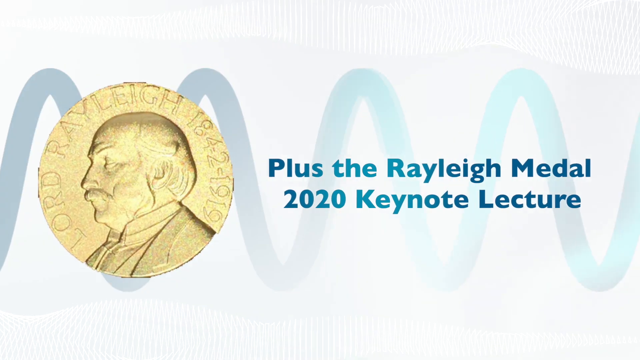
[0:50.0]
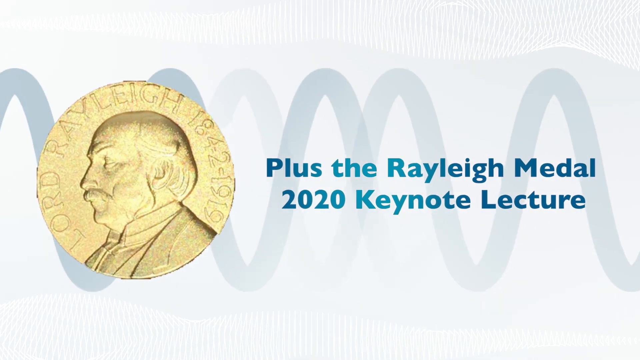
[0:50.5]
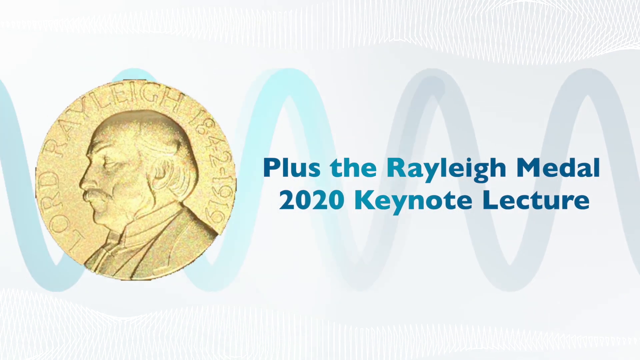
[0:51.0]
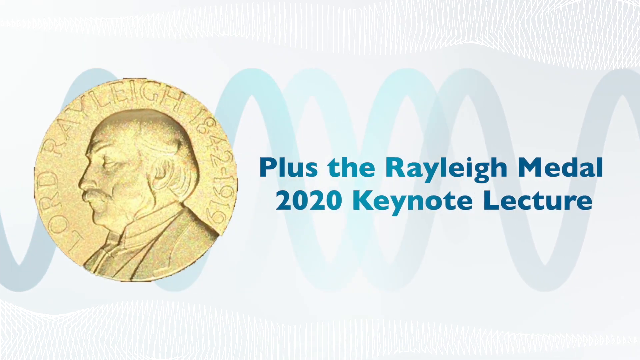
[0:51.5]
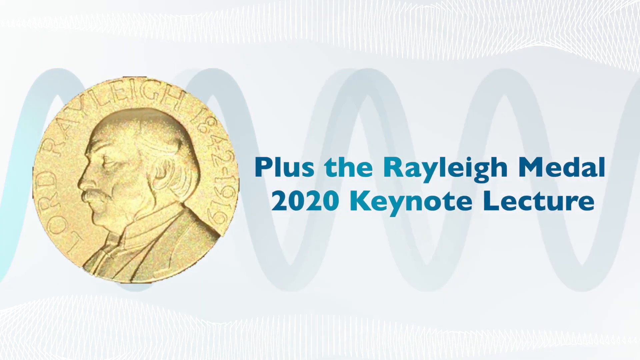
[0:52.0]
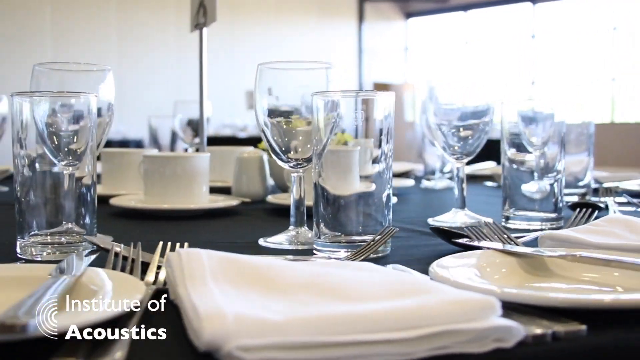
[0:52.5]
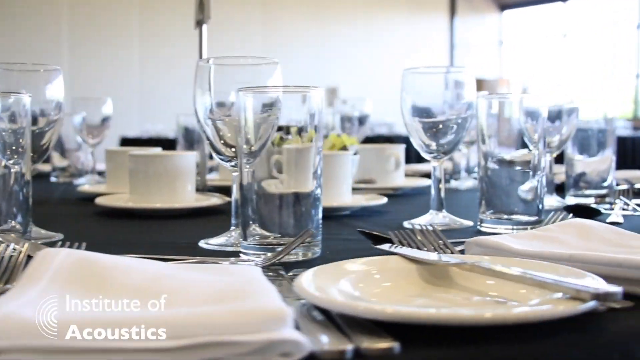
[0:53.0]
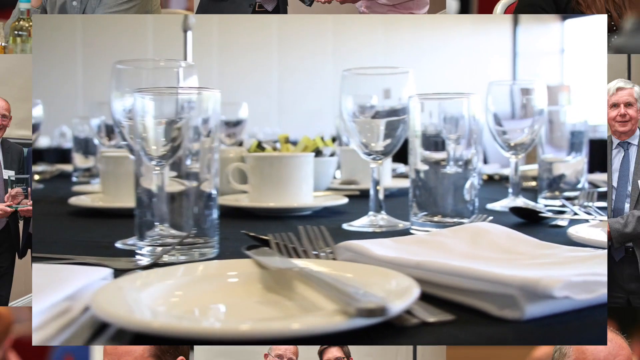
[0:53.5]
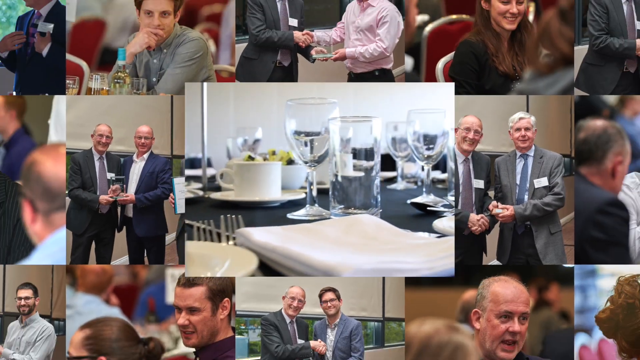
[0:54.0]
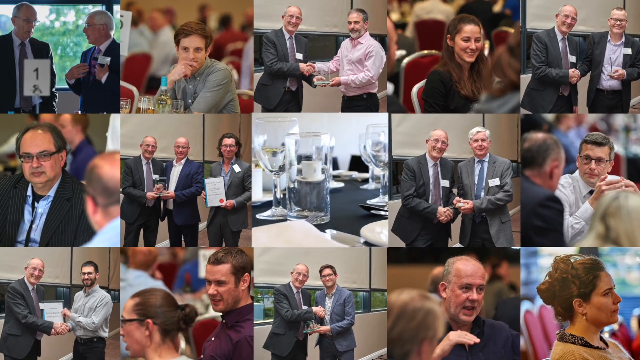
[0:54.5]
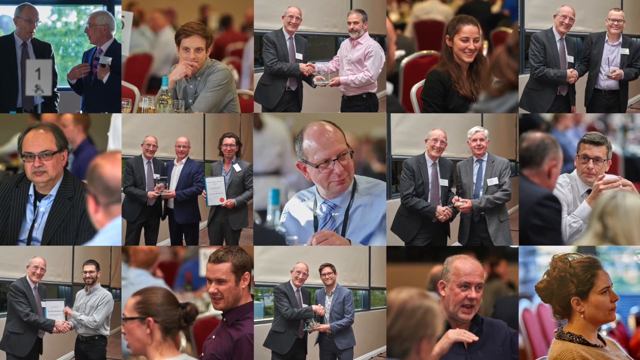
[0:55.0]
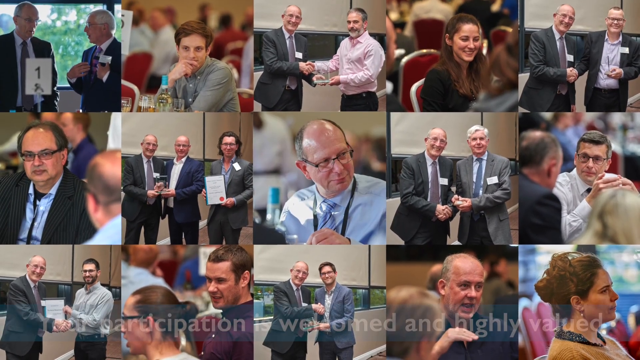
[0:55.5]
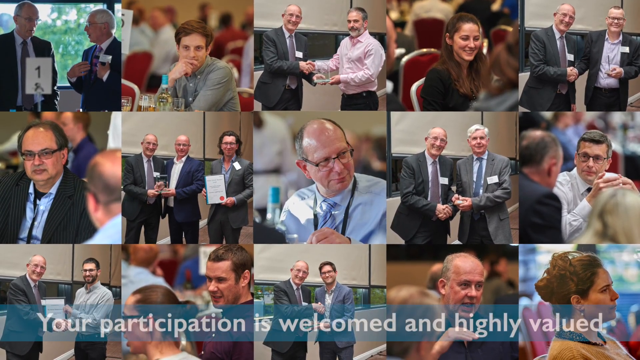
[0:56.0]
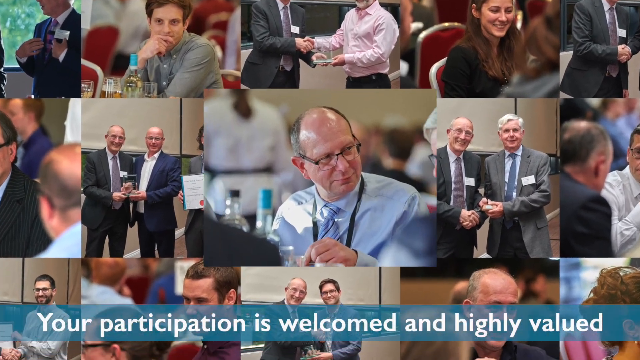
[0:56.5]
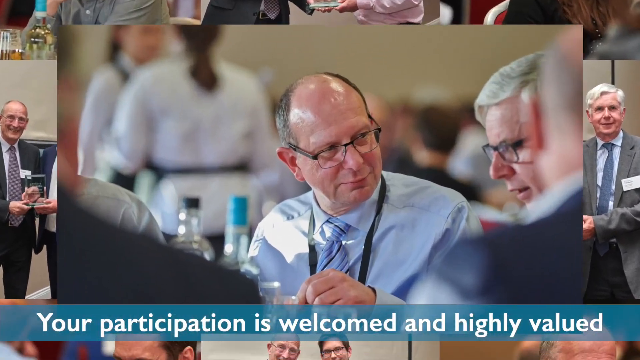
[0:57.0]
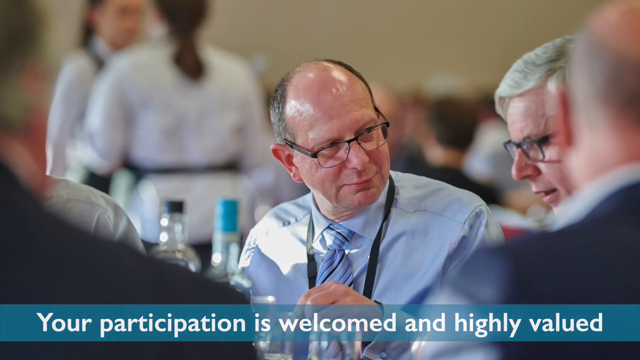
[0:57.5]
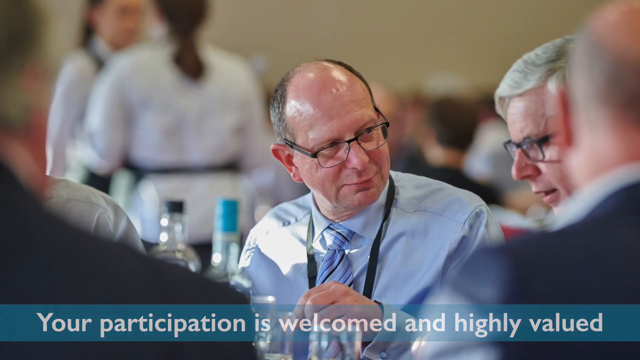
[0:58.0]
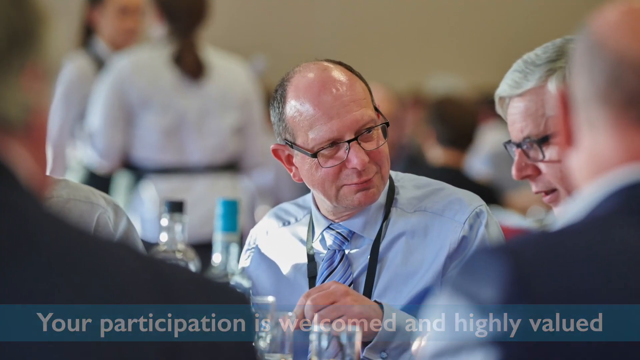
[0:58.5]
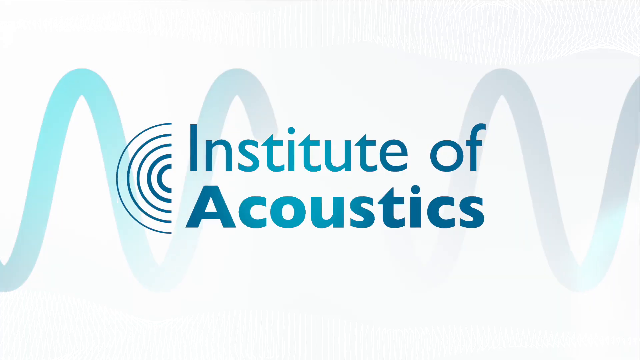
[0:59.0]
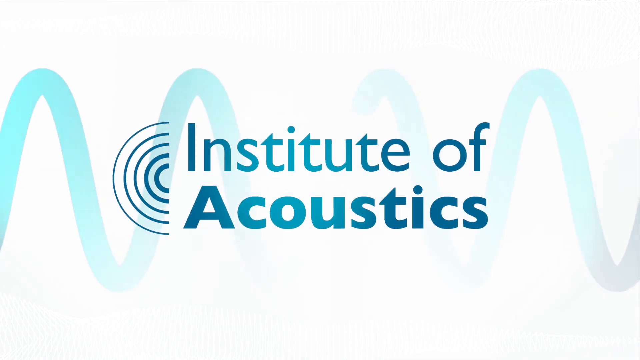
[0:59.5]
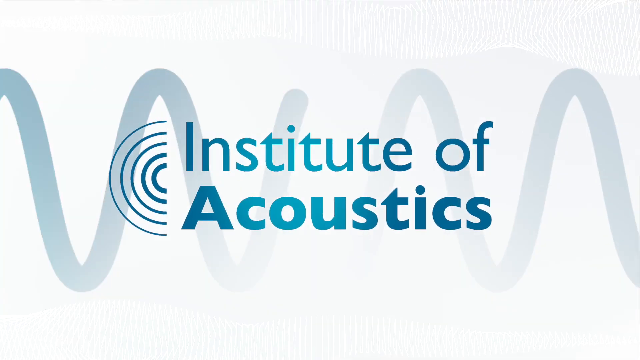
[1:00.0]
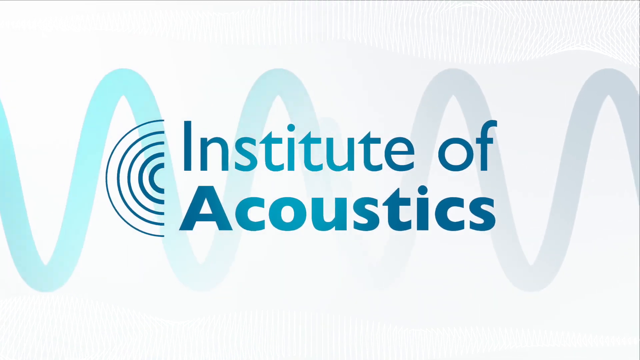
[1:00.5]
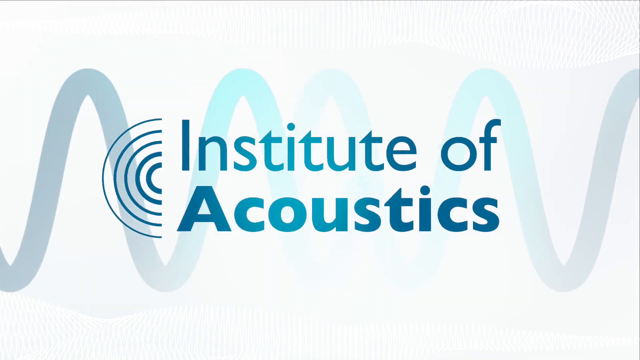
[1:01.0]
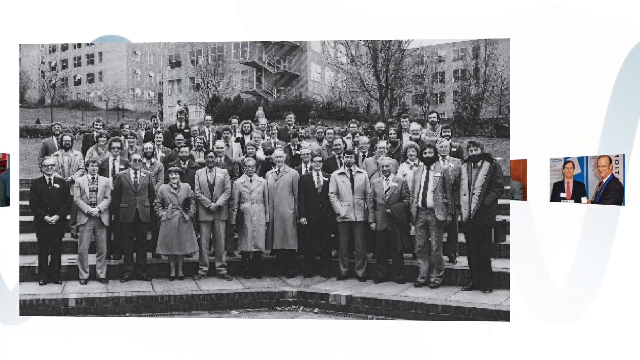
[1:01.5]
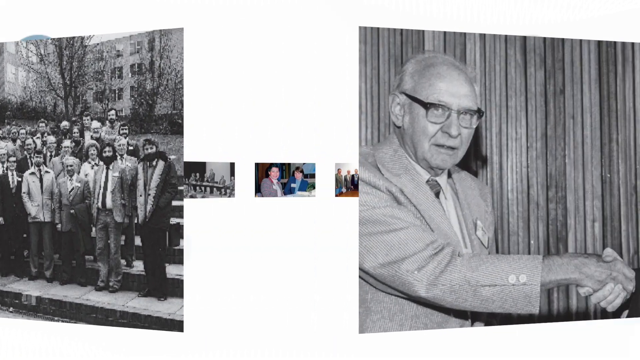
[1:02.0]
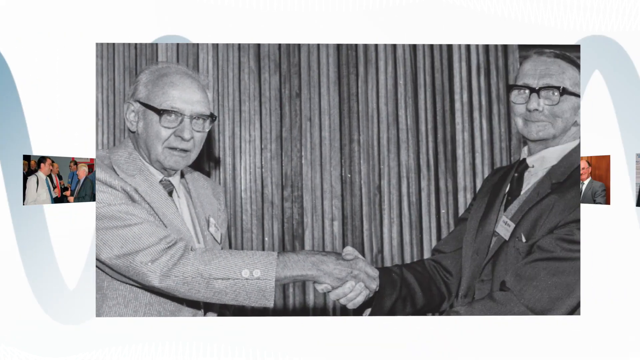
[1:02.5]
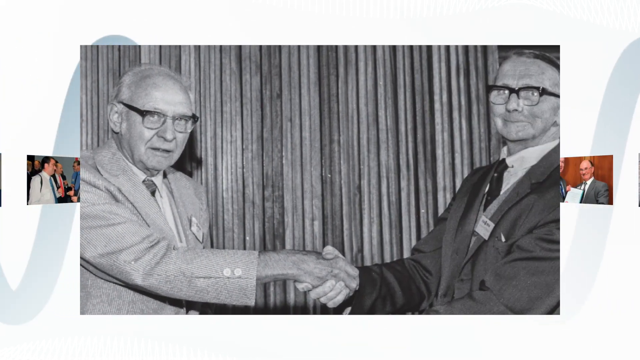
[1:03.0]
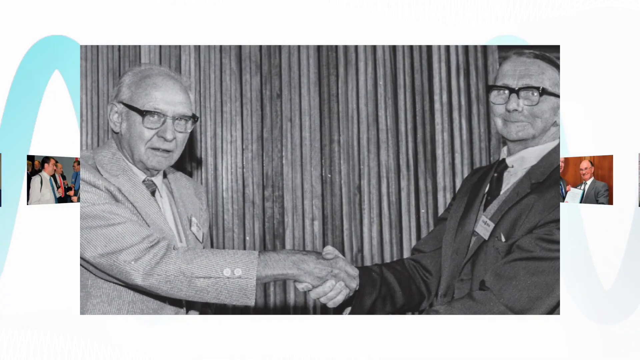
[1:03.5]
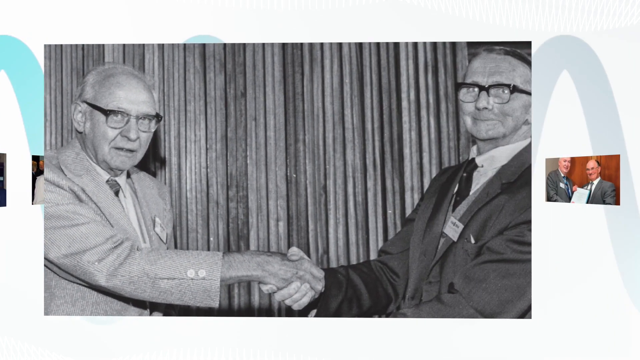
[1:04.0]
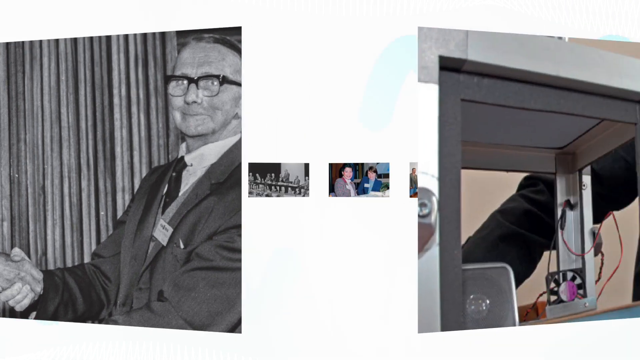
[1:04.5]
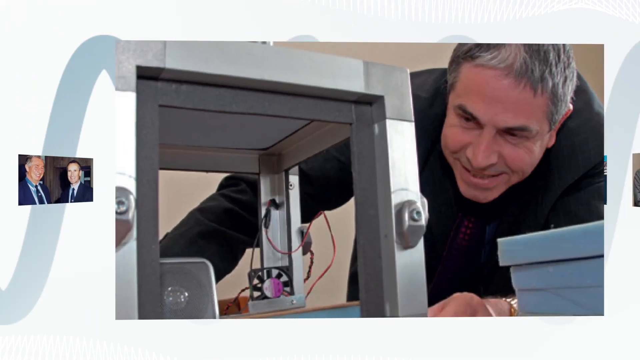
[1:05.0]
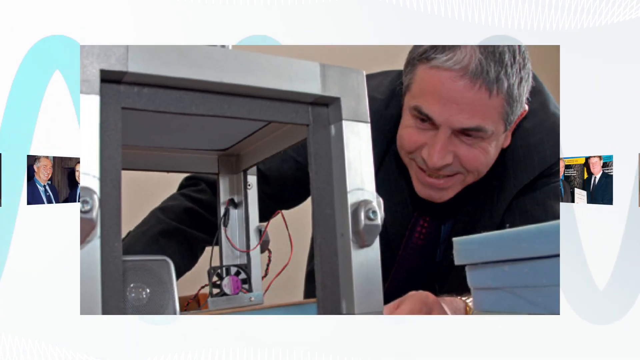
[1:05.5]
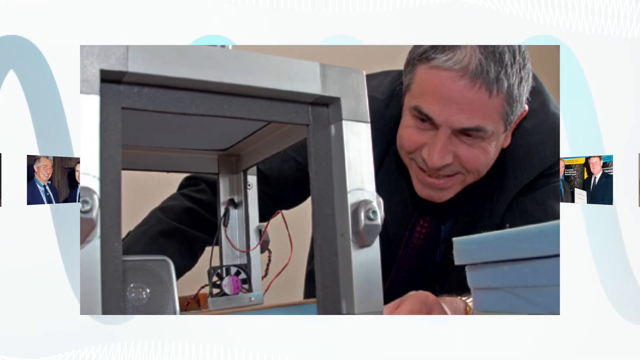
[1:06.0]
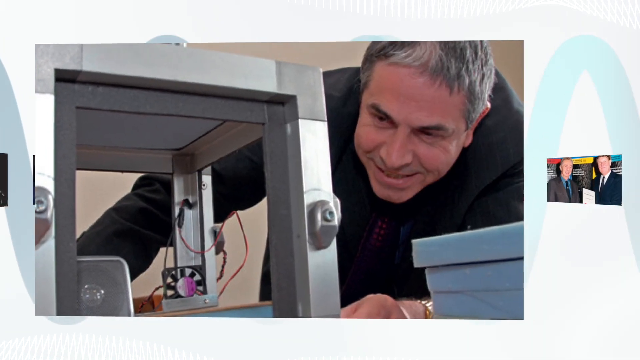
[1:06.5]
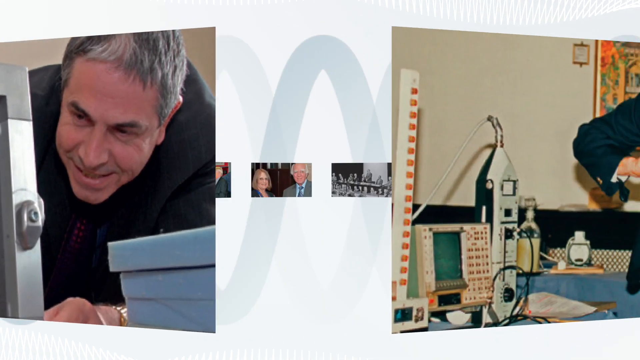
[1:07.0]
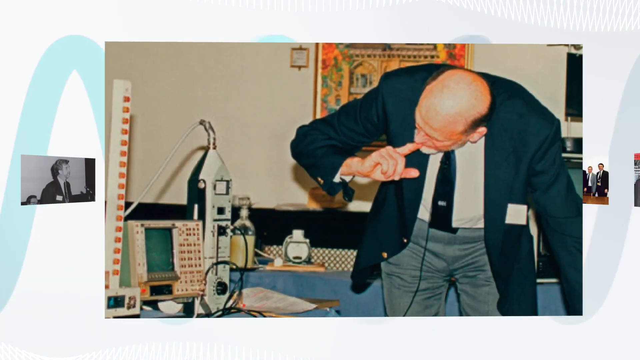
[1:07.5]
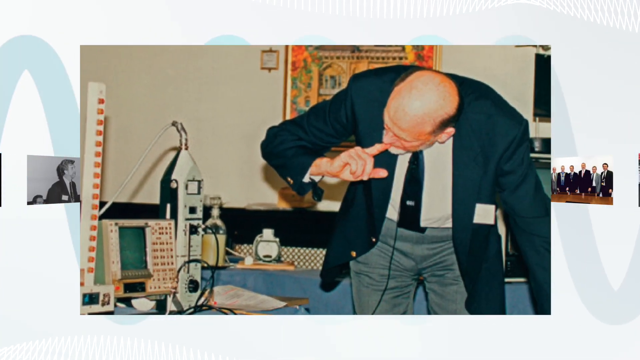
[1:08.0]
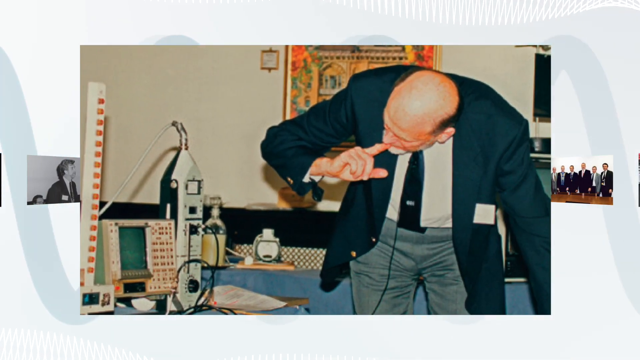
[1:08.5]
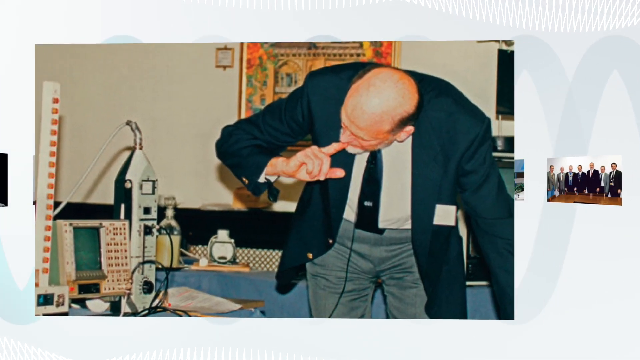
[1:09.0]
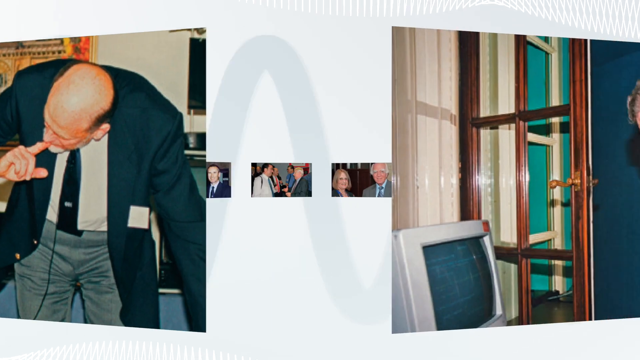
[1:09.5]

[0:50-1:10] Text reads "Lord Rayleigh 19." Many tables are set out with wine glasses, other glasses, forks and other items. Many people, dressed formally, shake hands and smile. Text reads "your participation is welcome and highly valued" along with "Institute of Acoustics." A series of black-and-white photos shows people shaking hands, and then someone is looking at a lot of electronics and robotics.